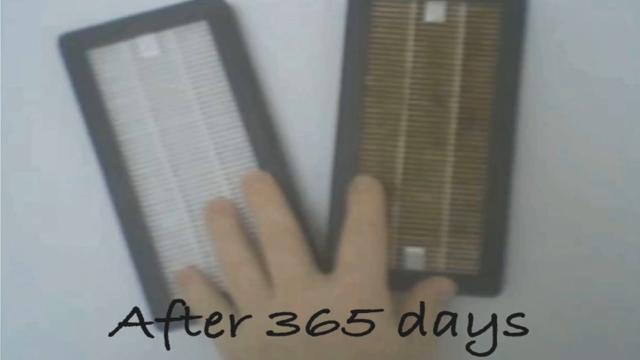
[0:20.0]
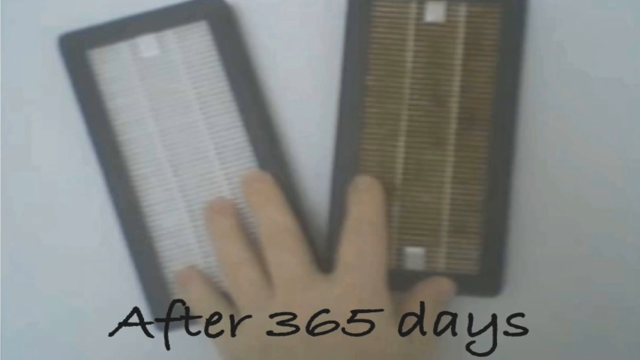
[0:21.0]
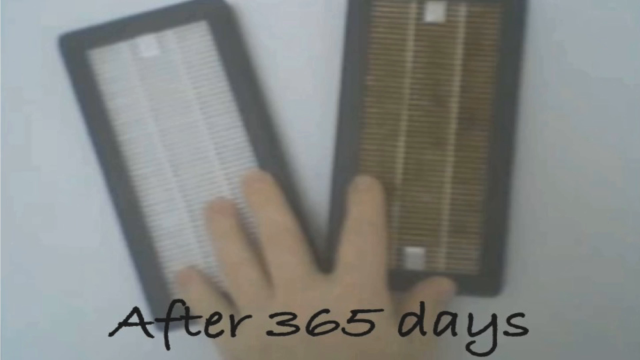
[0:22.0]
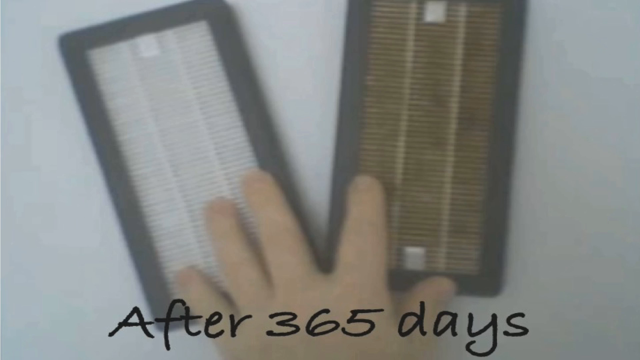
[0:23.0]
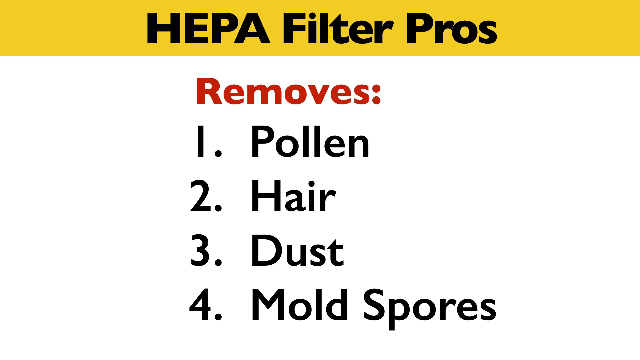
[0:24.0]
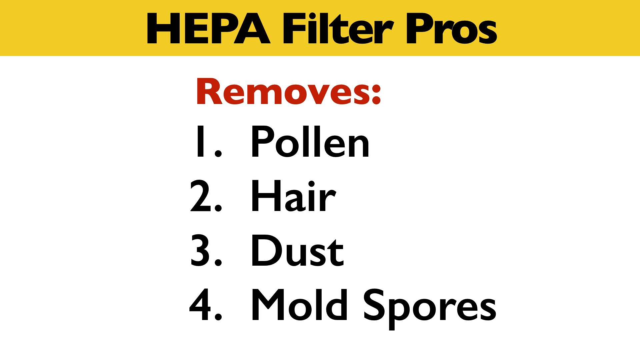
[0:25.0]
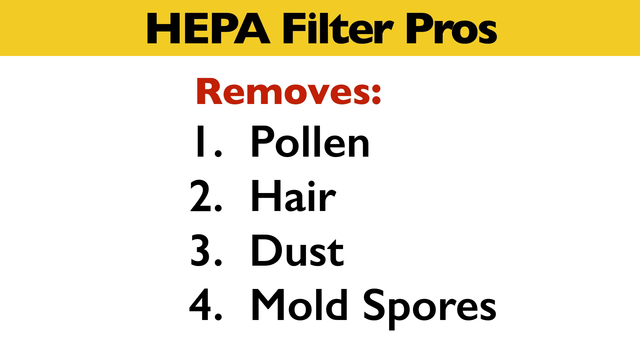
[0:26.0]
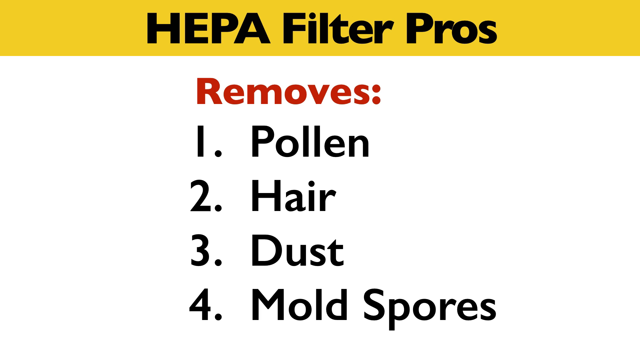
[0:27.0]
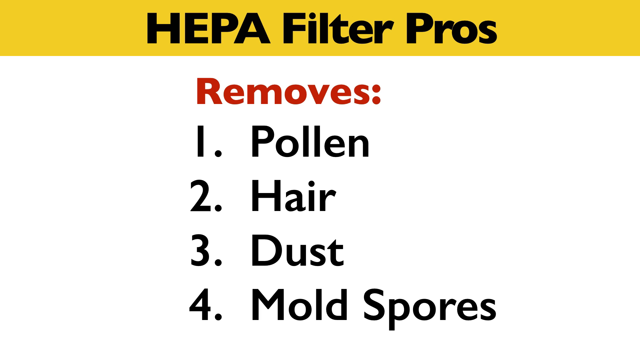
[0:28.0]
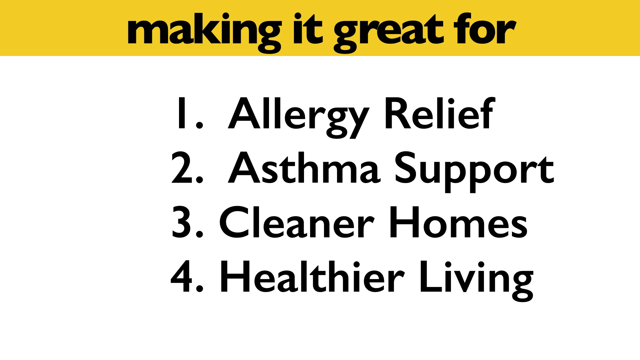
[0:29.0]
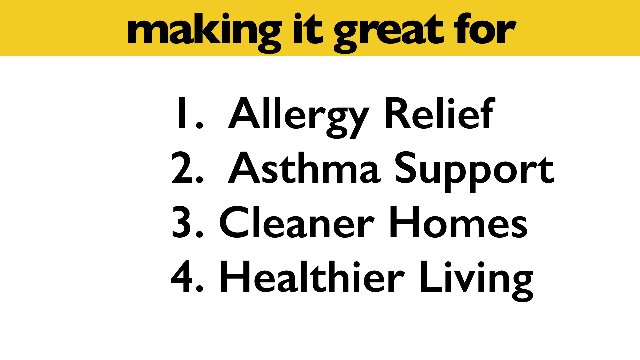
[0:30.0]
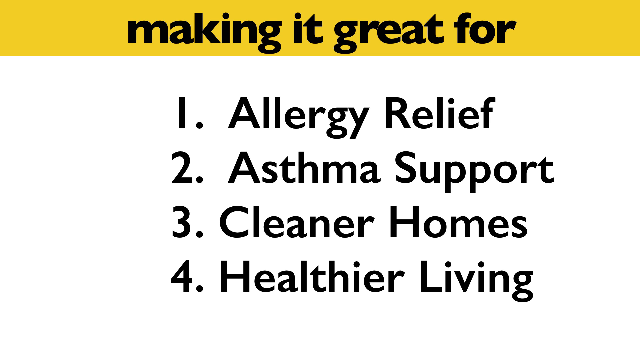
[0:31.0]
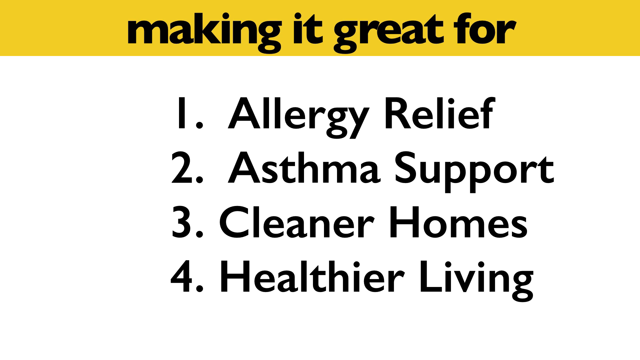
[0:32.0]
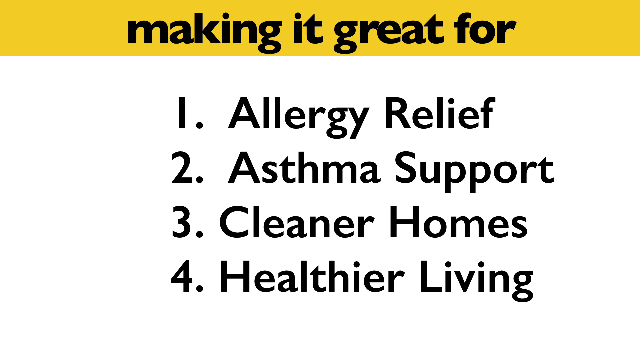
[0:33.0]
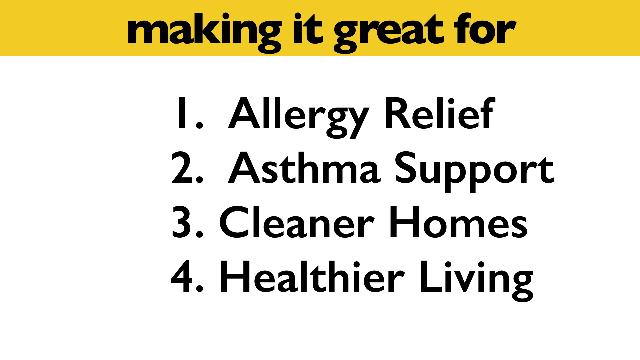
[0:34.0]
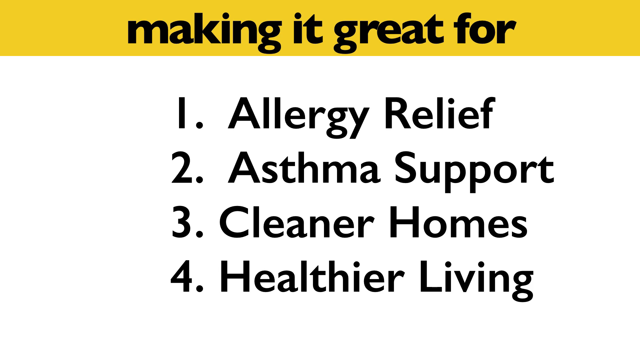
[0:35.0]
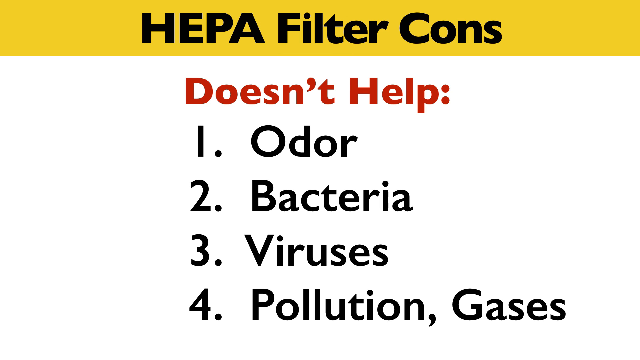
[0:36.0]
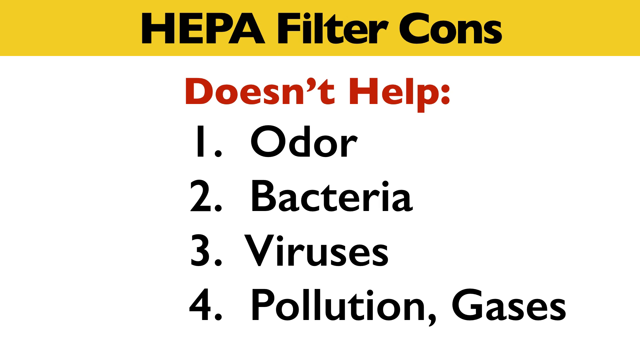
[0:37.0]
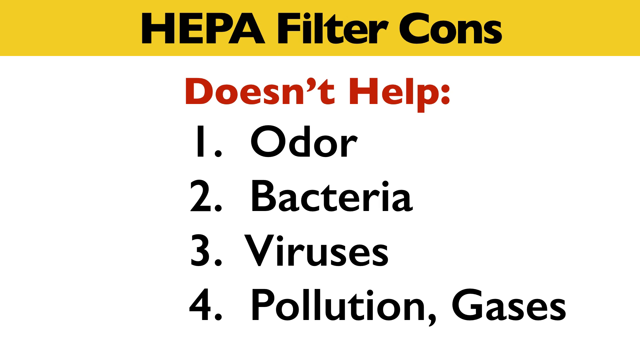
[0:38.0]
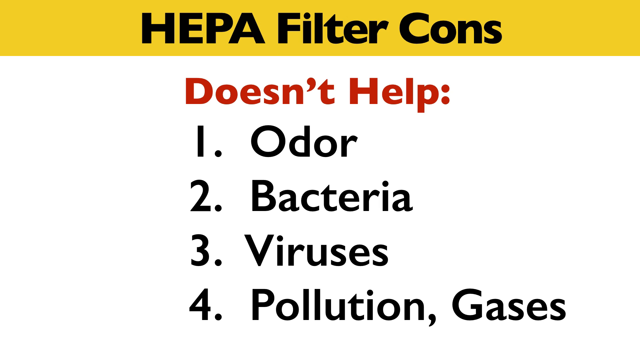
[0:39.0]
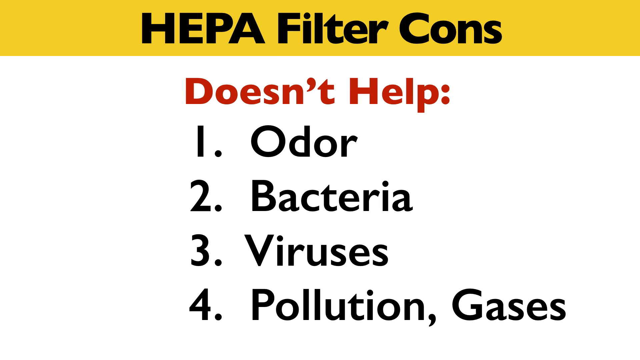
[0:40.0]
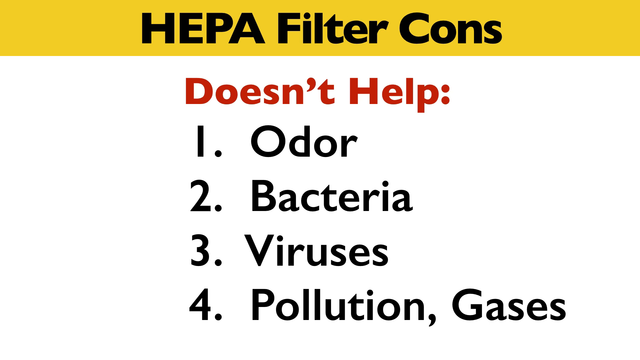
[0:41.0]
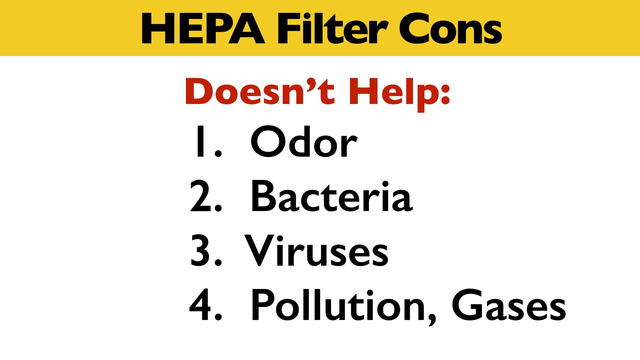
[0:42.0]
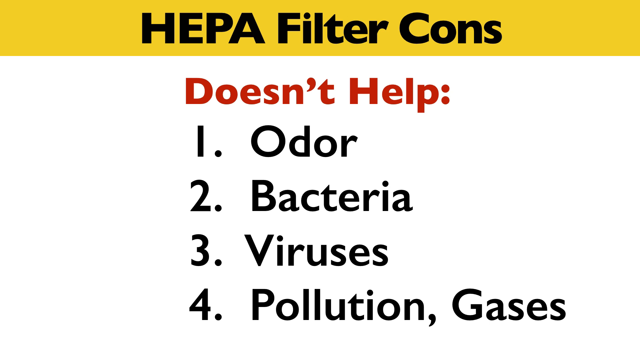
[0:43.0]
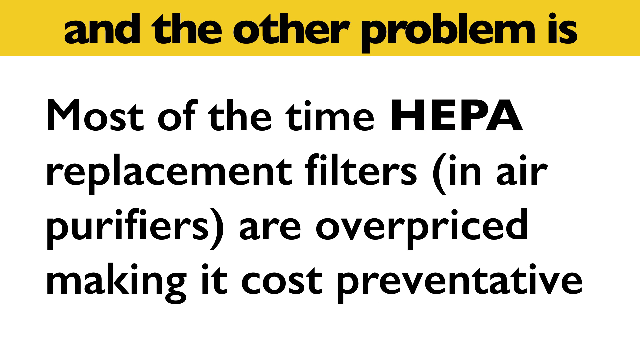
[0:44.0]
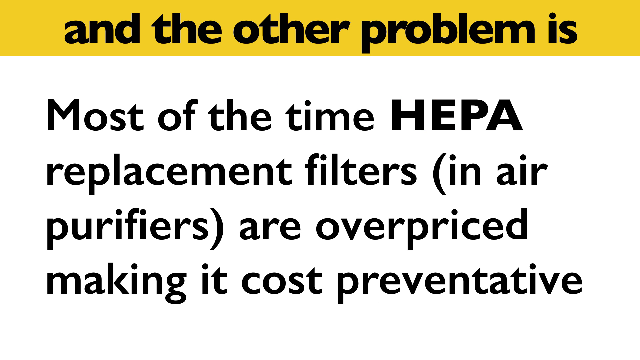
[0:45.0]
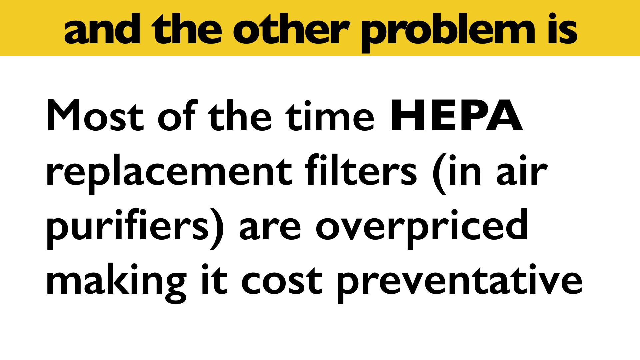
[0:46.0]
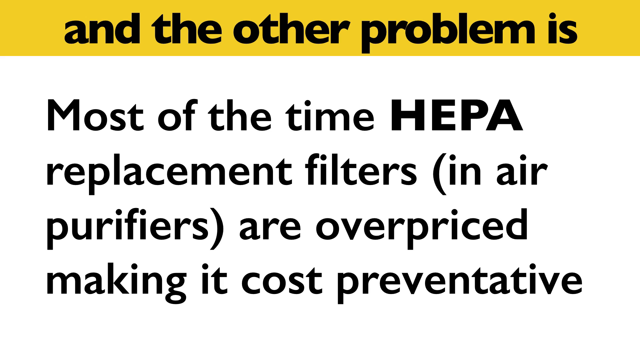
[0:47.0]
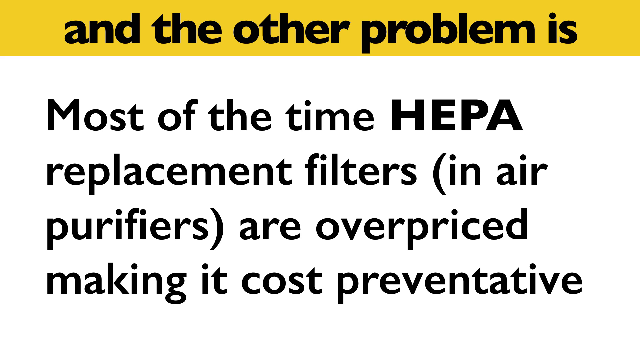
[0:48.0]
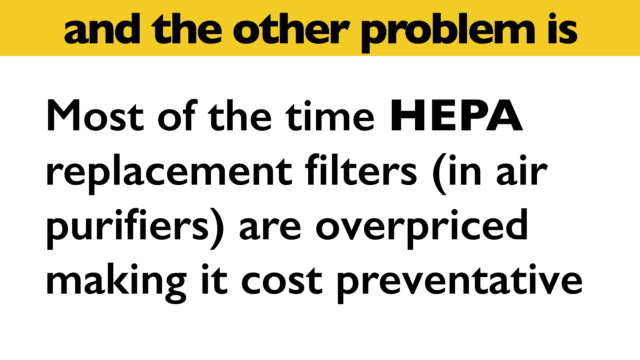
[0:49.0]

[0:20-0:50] After the picture of the clean and dirty HEPA filters, a slide appears with yellow across the top. "HEPA filter pros" is in bold text on a yellow box taking up about five percent of the top of the screen. Below, the text reads "removes 1 pollen, 2 hair, 3 dust, 4 mold spores", justified to the left but indented by about a third of the screen; the word "removes" is bold and in red, and the rest is standard text in a numbered list. A similar slide reads "making it great for" followed by another numbered list: "allergy relief", "asthma support", "cleaner homes", "healthier living". Another similar slide reads "HEPA filter cons", with "doesn't help" in bold red, followed by a numbered list: "1 odour, 2 bacteria, 3 viruses, 4 pollution and gases". A slide of exactly the same appearance follows, with the title "and the other problem is" and left-justified text reading "most of the time HEPA replacement filters in air purifiers are overpriced making it cost preventative".